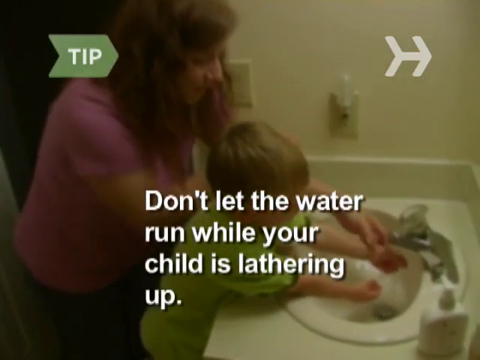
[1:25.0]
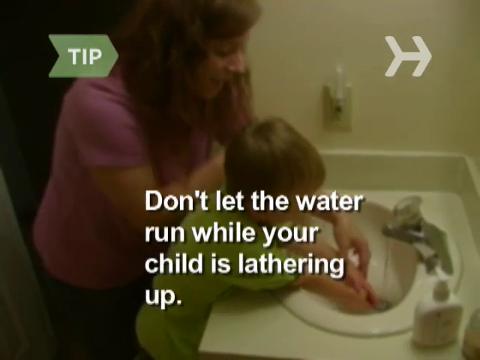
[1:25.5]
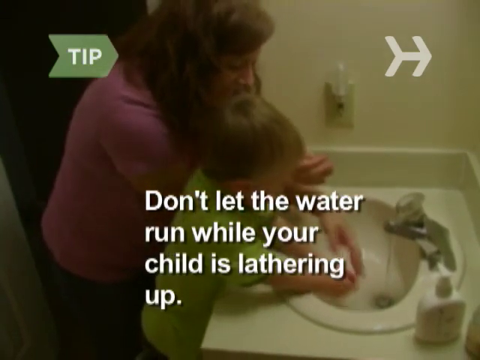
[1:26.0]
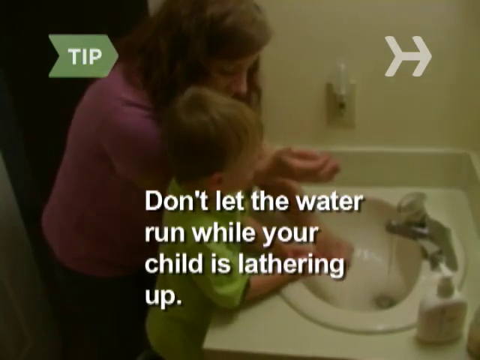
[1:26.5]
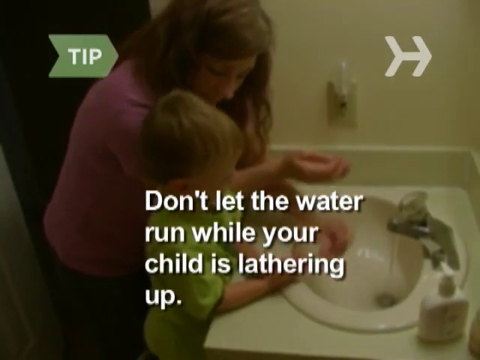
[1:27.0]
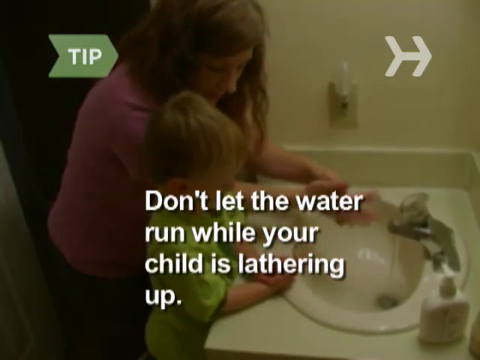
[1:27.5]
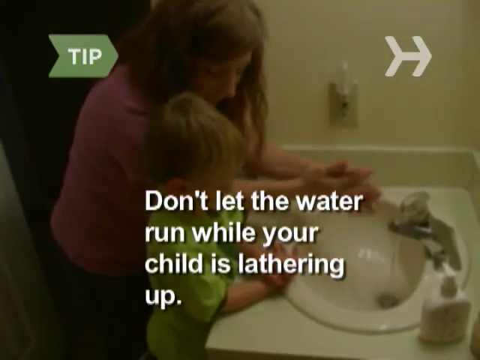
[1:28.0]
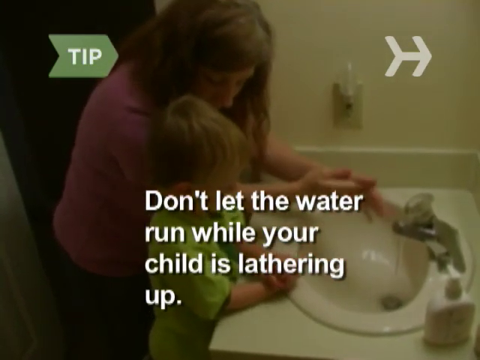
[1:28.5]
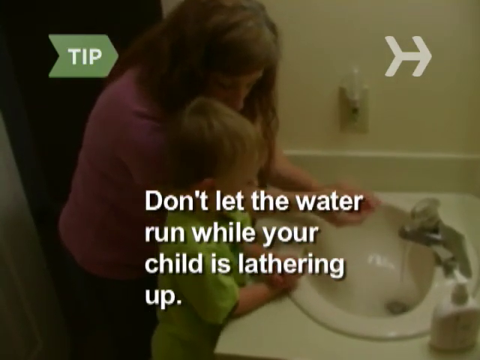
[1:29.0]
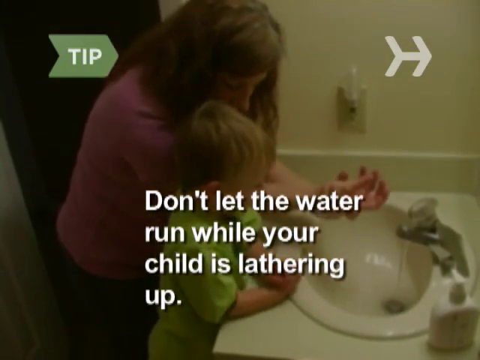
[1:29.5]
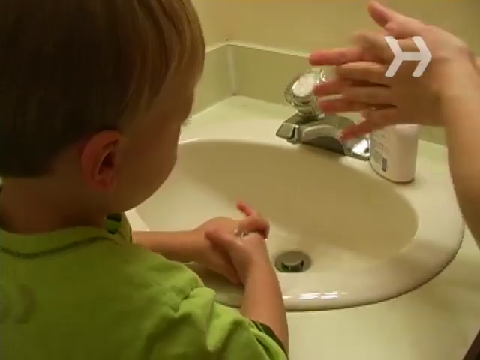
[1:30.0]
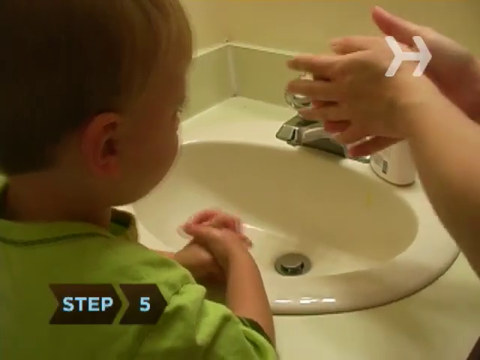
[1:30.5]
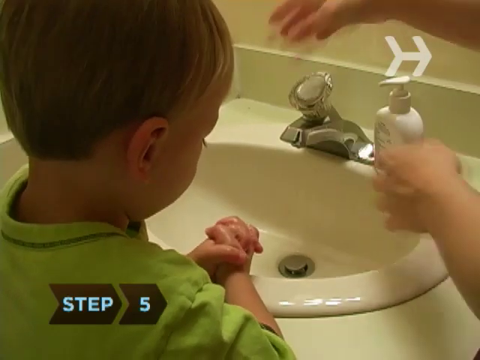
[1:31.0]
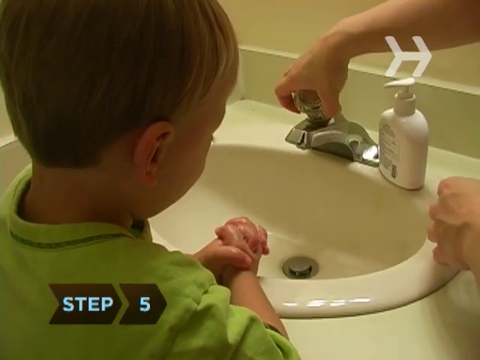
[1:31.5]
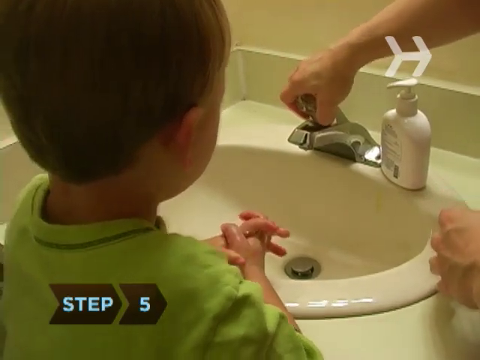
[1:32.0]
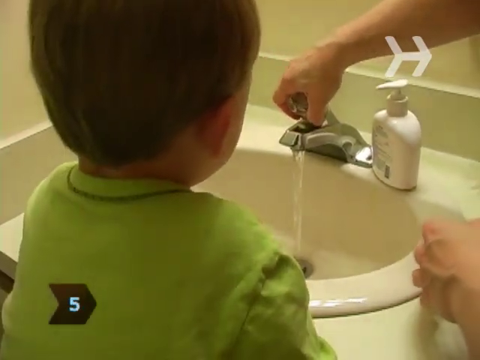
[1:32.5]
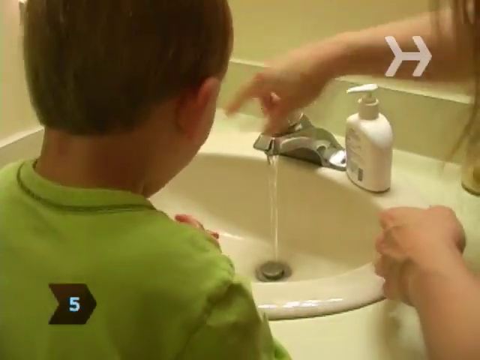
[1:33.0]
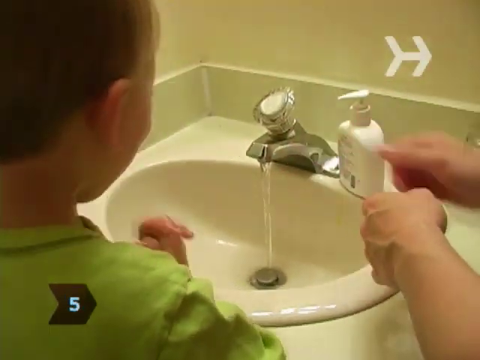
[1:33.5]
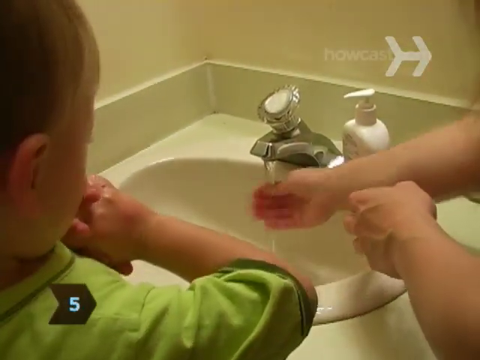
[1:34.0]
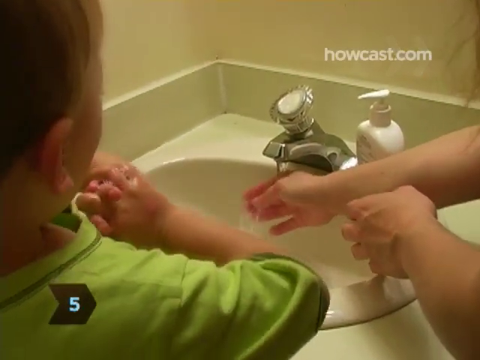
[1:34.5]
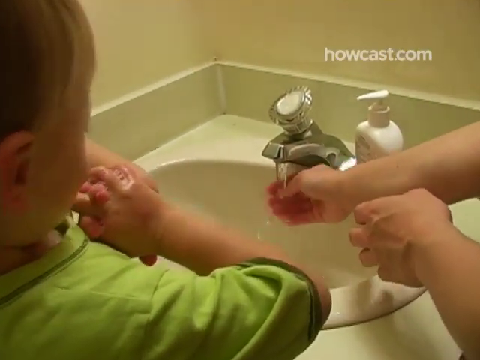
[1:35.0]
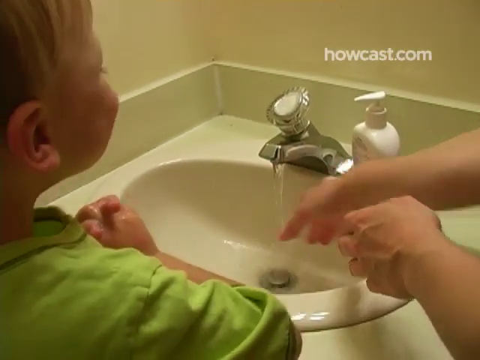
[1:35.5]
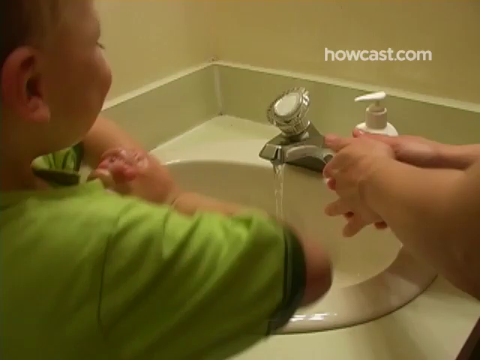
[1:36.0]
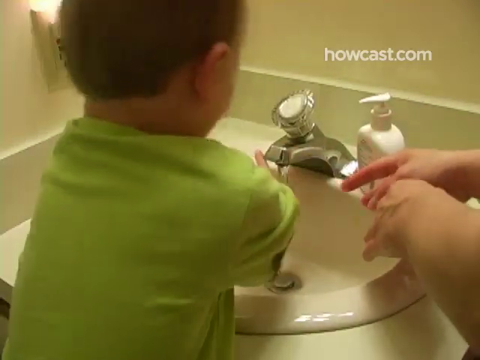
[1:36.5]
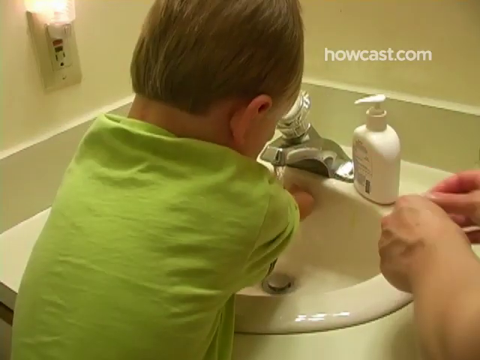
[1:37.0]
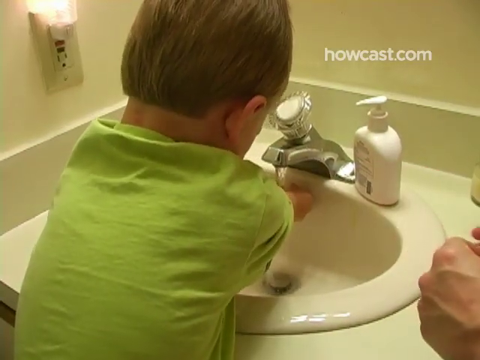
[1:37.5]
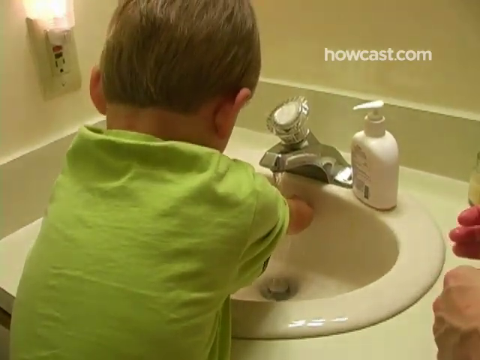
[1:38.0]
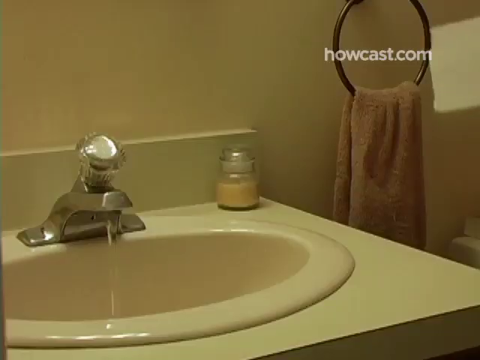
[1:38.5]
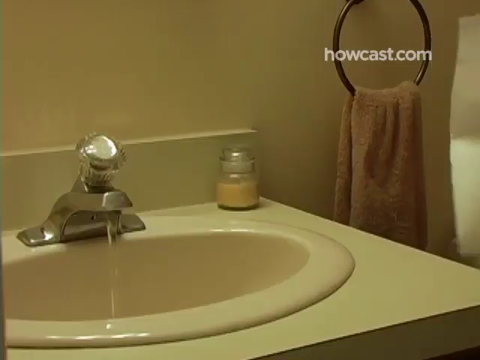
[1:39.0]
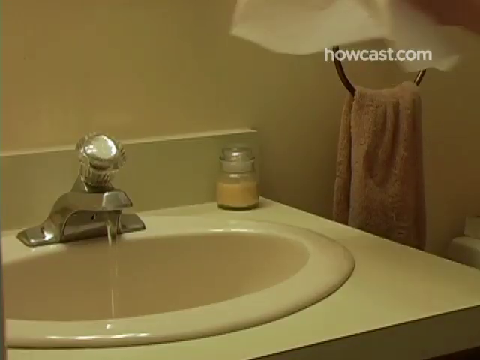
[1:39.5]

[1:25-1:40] The mother reaches in and pulls the knob out again so the child can rinse; the knob appears to be positioned more in the center, possibly for standard warm water. The on-screen step number reads step five, shown as blue text over a semi-translucent black arrow shape, as the step numbers are throughout the steps; this step is about rinsing. The mother comes in with a paper towel in her hand, apparently for a step six, drying off. Ads start popping up on the video.